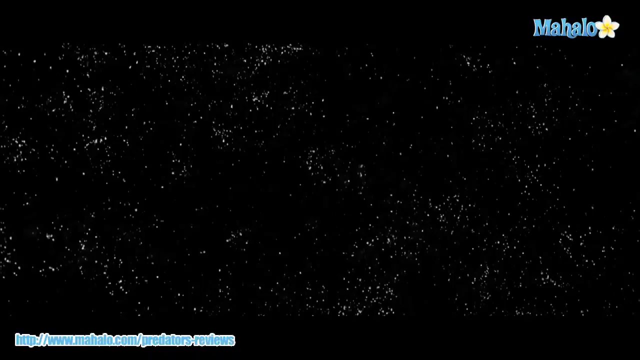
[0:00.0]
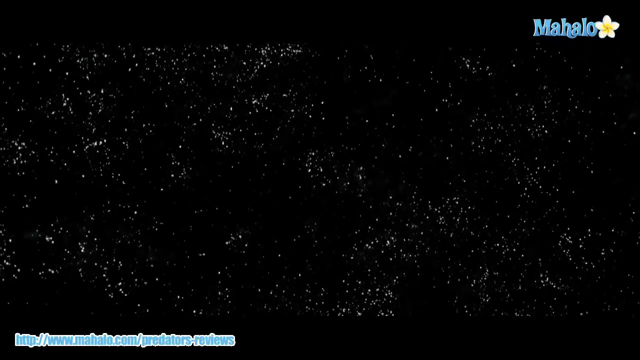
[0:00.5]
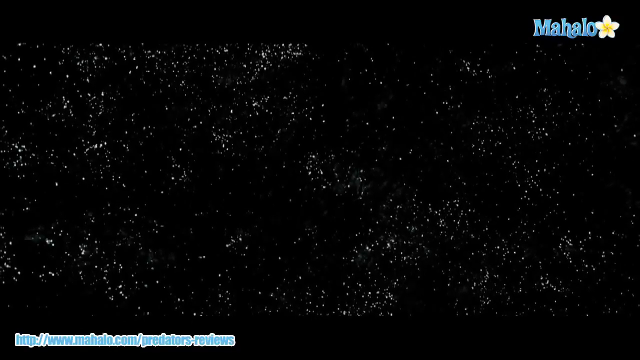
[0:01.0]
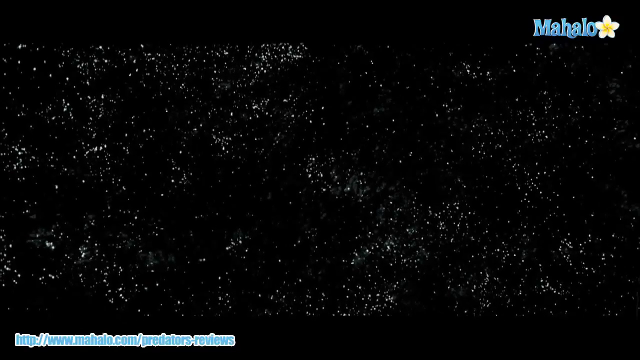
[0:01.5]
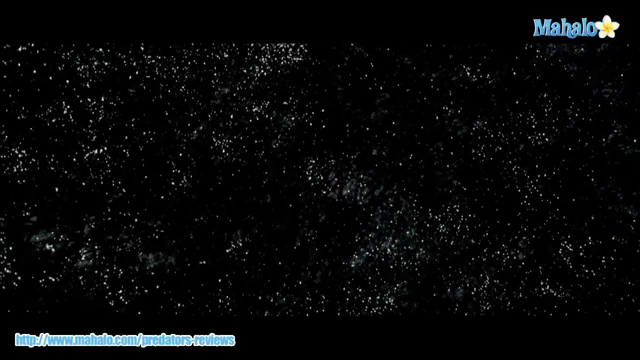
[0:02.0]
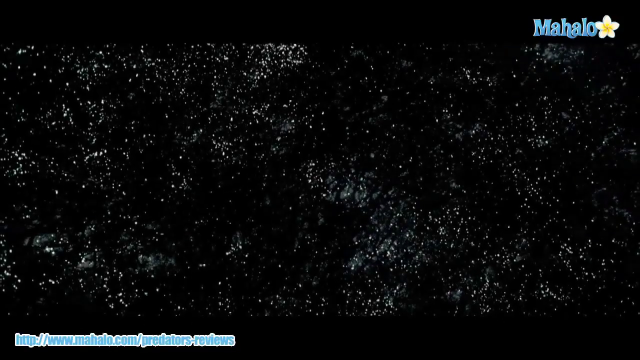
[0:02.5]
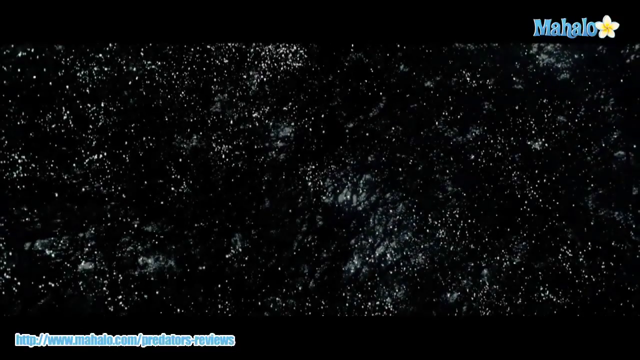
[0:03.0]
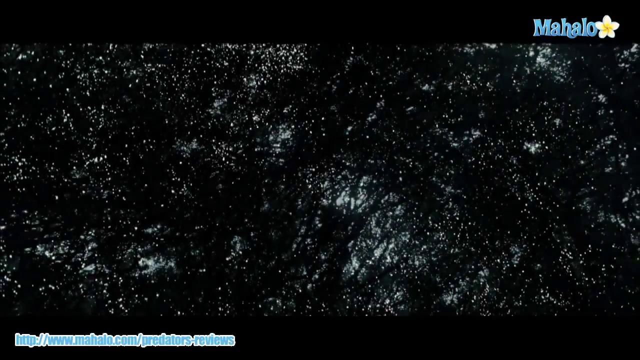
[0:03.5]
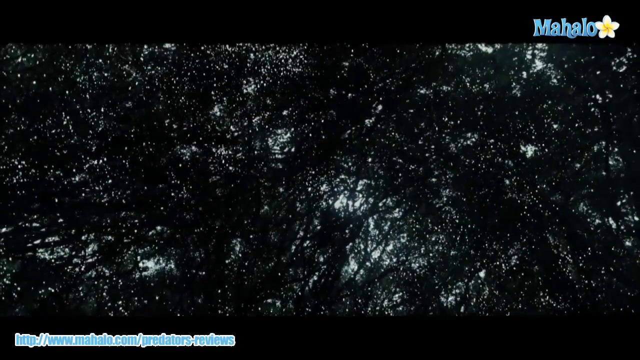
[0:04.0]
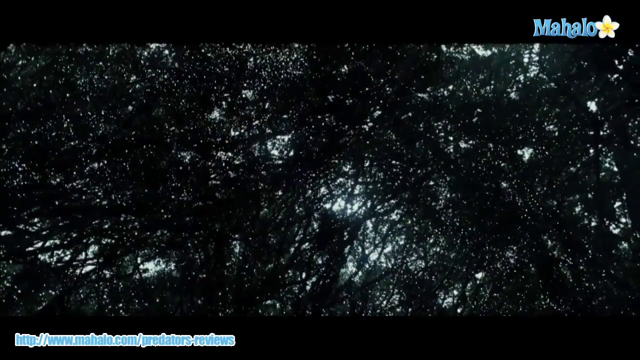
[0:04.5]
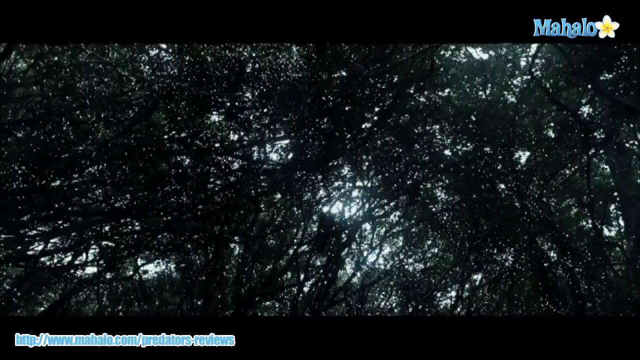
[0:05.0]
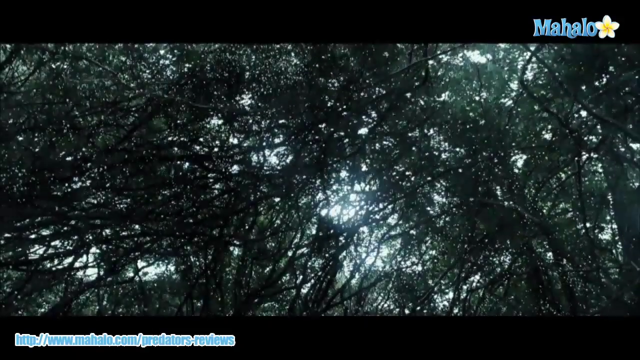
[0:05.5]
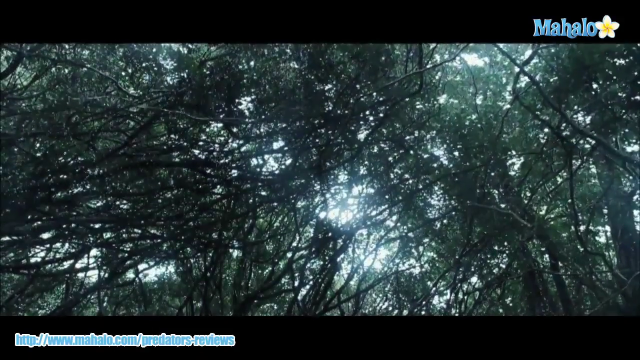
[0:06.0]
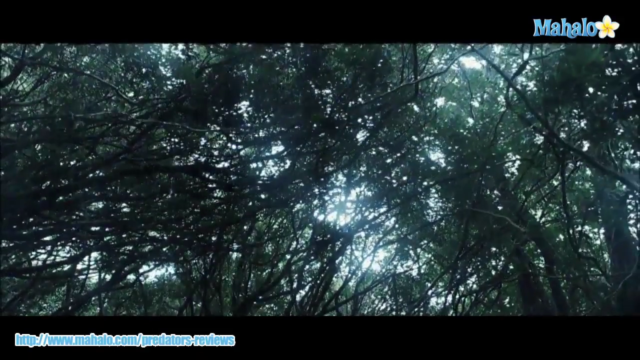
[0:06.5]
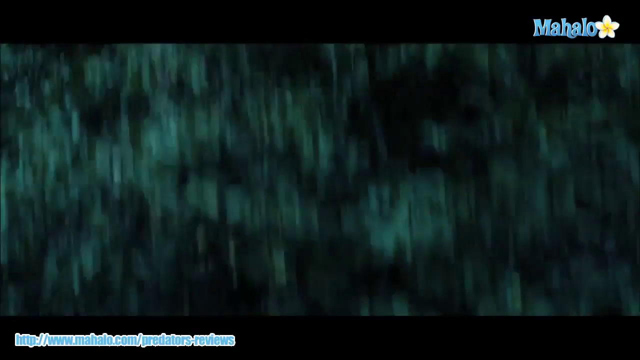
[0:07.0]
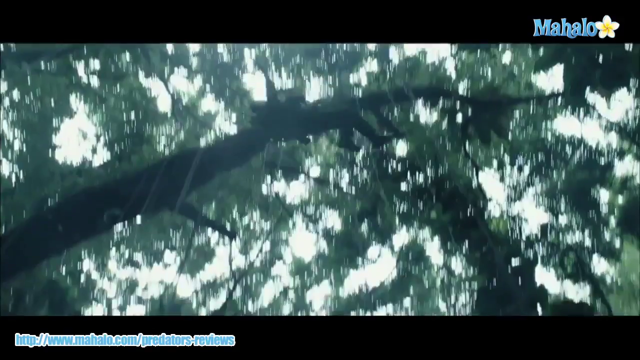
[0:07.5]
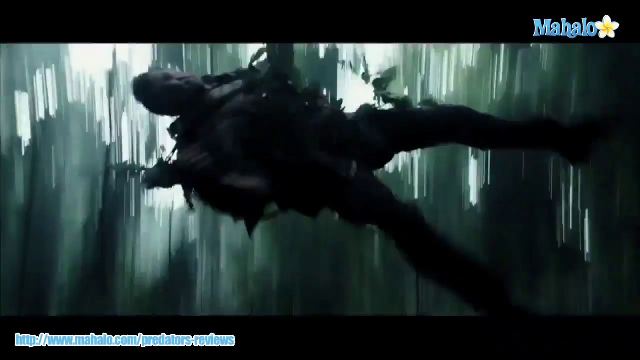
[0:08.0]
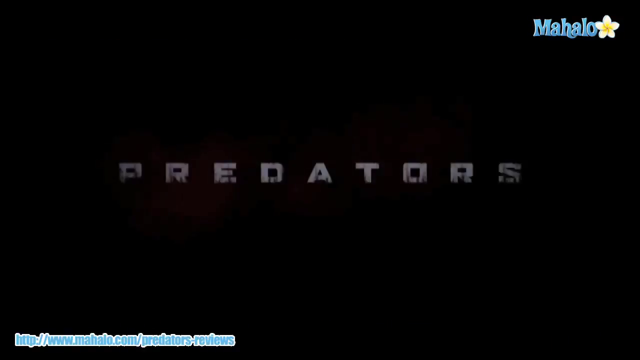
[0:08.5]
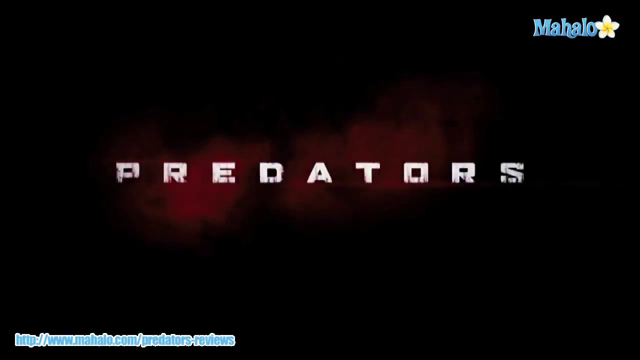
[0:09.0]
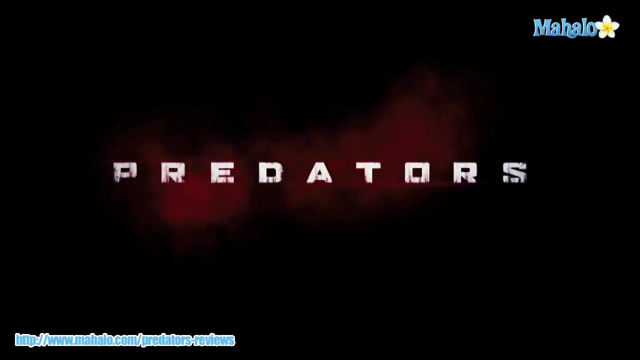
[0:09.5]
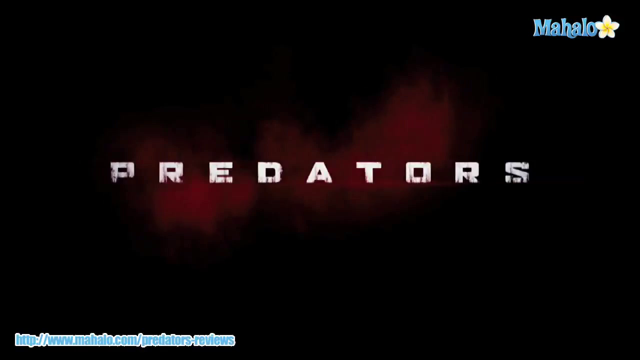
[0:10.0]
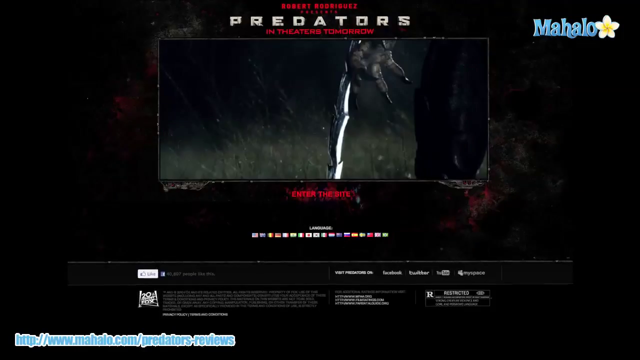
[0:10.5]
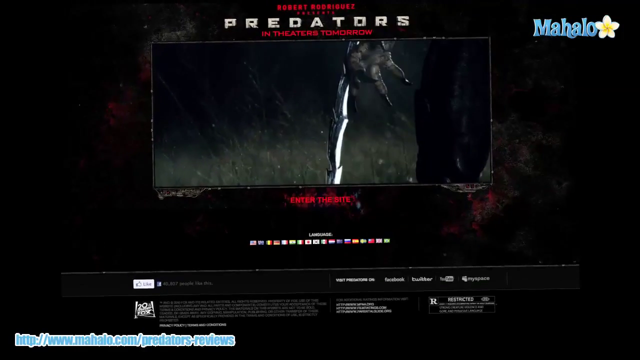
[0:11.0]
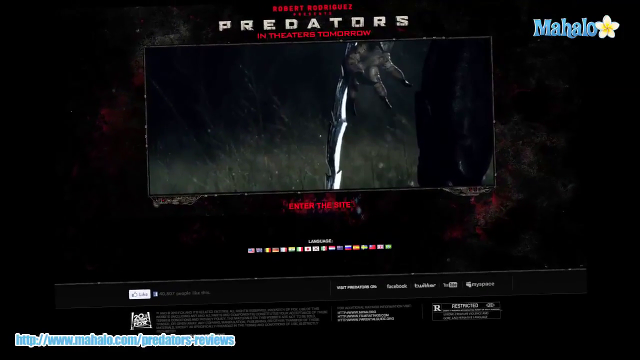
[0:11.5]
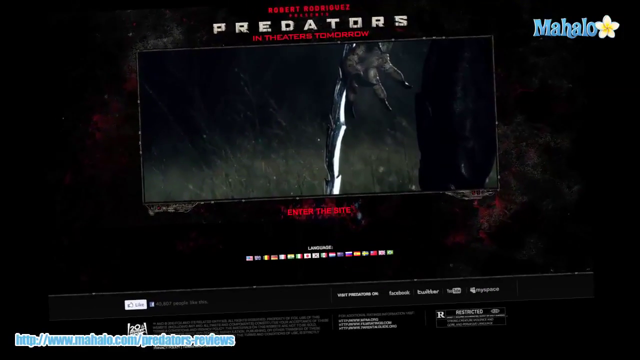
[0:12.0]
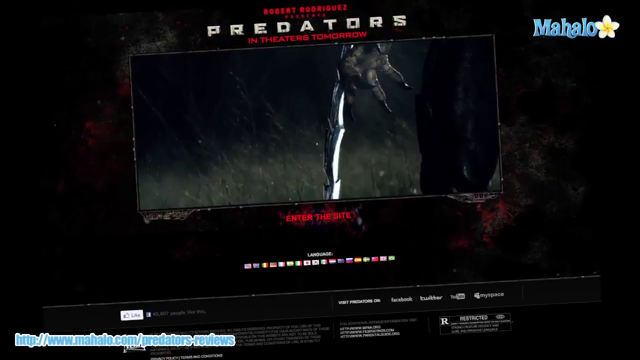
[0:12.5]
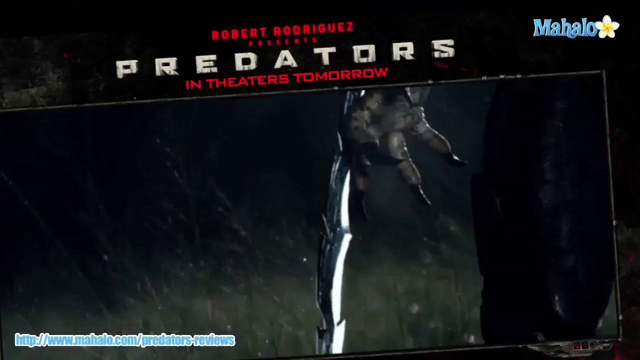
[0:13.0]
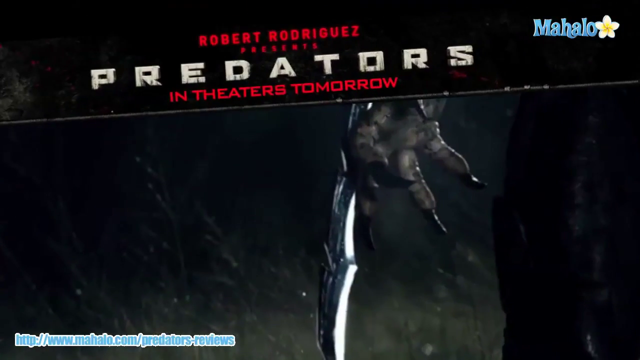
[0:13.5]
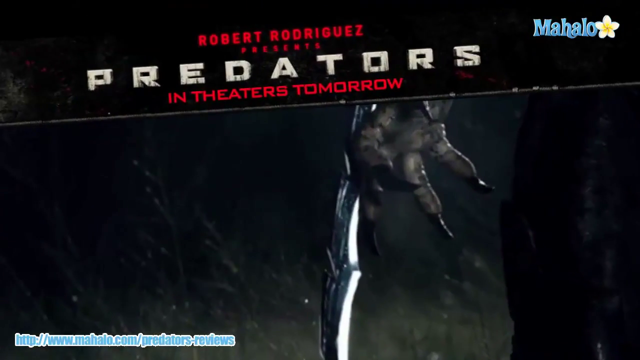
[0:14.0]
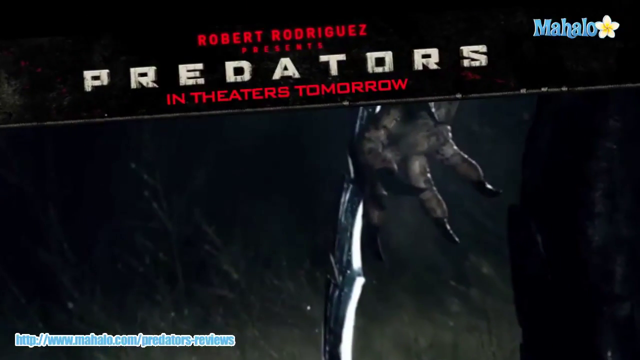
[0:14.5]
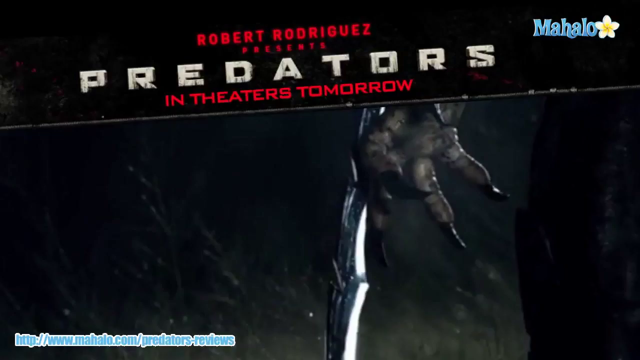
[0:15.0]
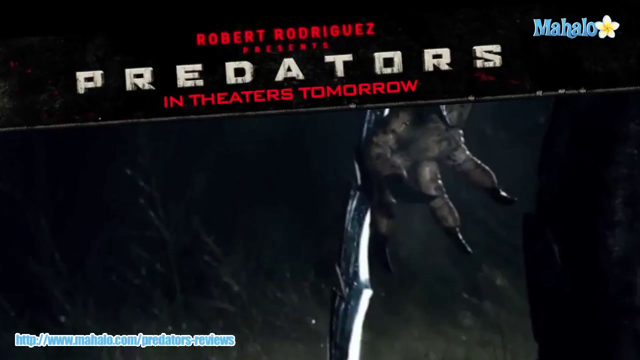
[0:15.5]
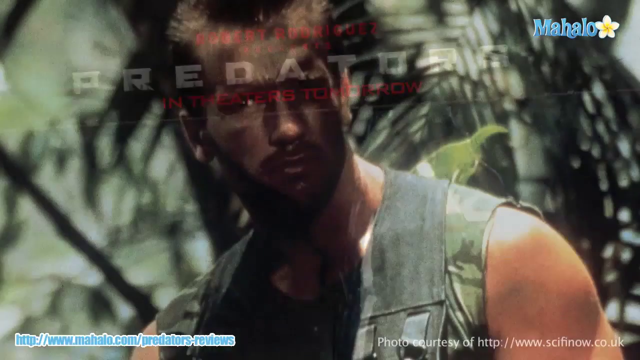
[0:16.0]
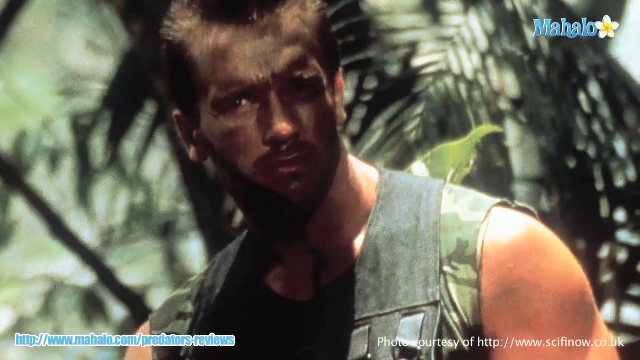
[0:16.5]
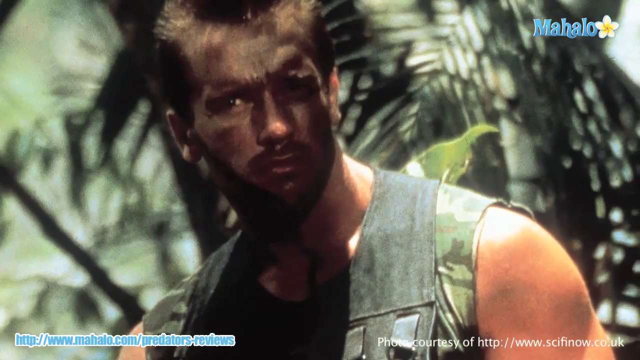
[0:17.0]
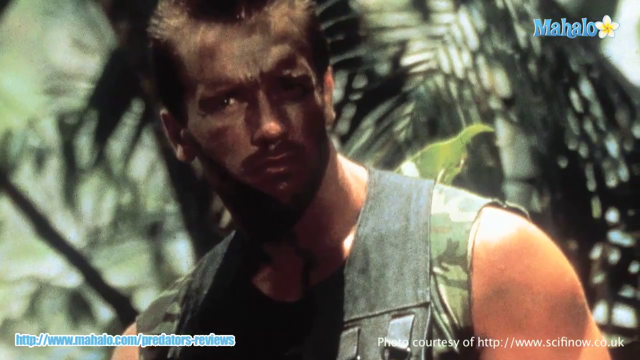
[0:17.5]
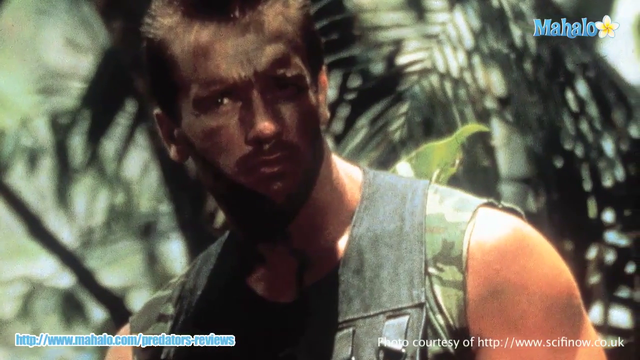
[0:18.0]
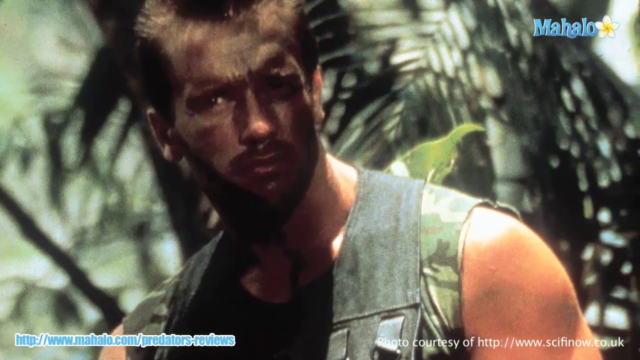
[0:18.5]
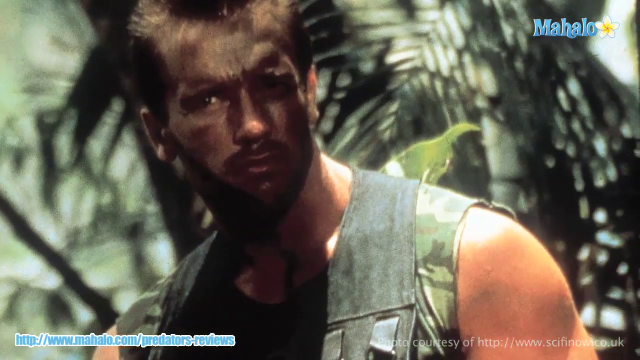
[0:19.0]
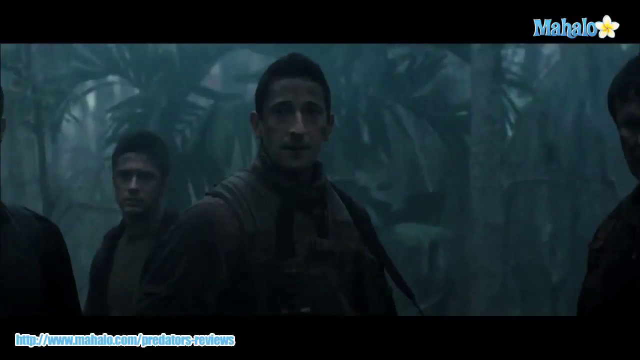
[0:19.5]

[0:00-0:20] Many little lights appear. Next comes a glimpse of branches with some leaves, the sun piercing through them. A man falls off a tree; he is male, wears a black outfit and has a backpack, and he hits the ground. After his fall, the film's name appears, reading "Predators", with red mist behind the name. An ad for a Predators type of game follows, showing a figure holding a blade in his fingers, along with a choice of languages. He says that Robert Rodriguez Predator is in theaters tomorrow. A main guy appears: a man with short hair wearing a vest in military colors. Another guy is shown after that.